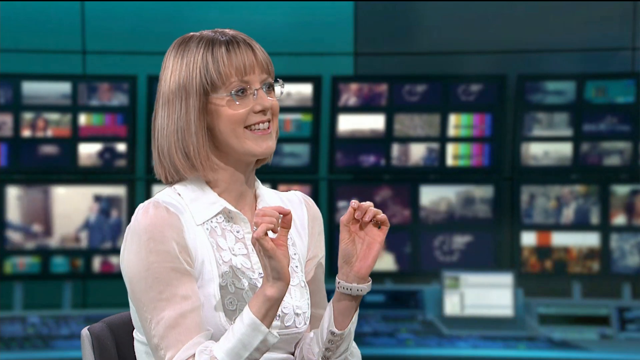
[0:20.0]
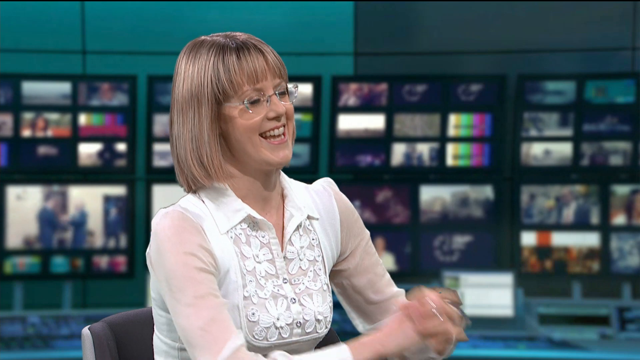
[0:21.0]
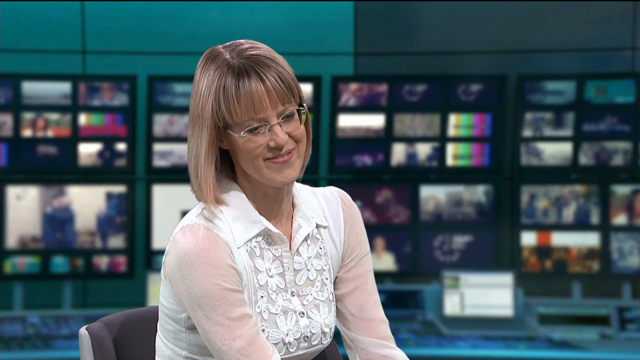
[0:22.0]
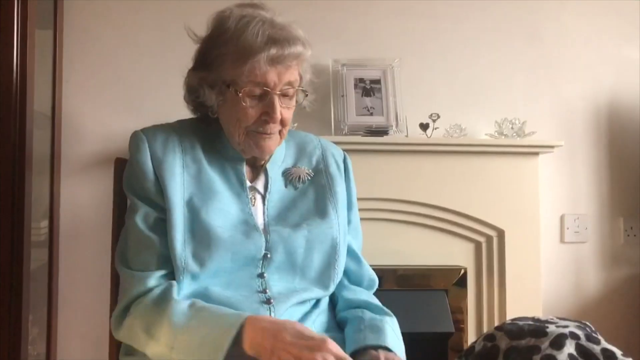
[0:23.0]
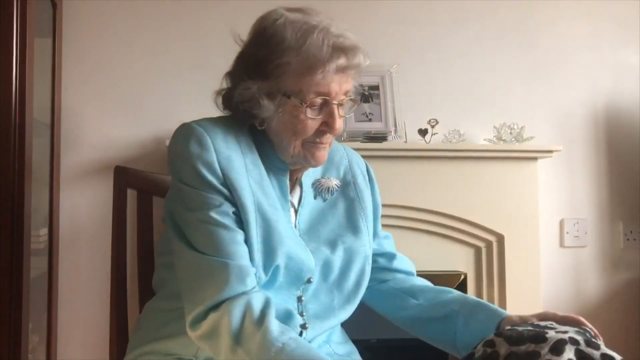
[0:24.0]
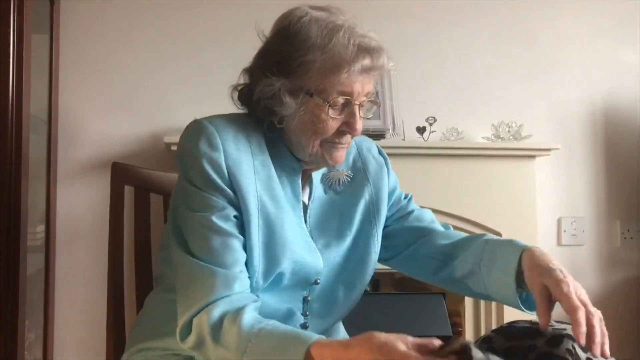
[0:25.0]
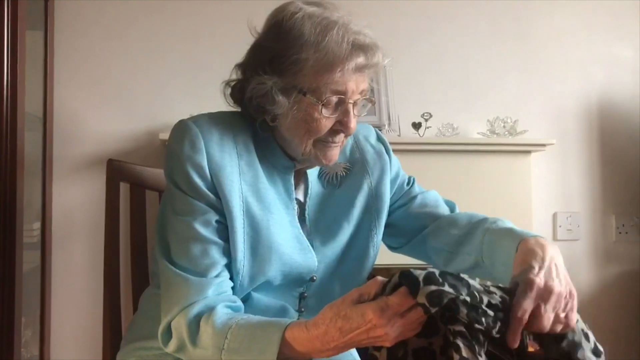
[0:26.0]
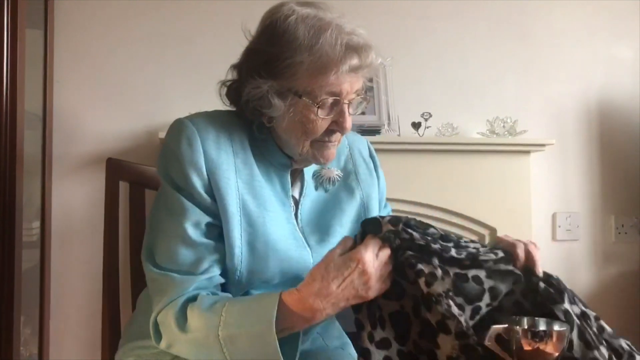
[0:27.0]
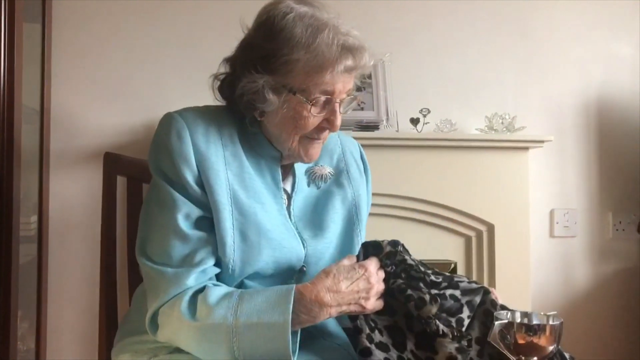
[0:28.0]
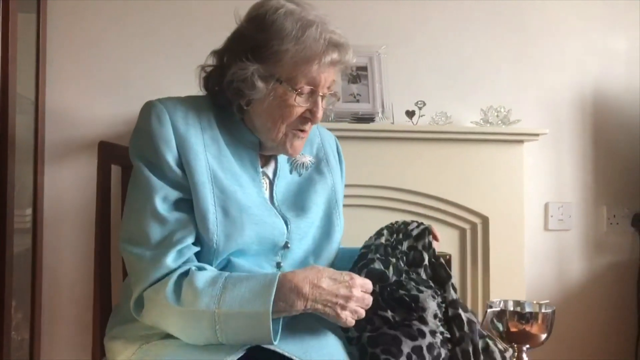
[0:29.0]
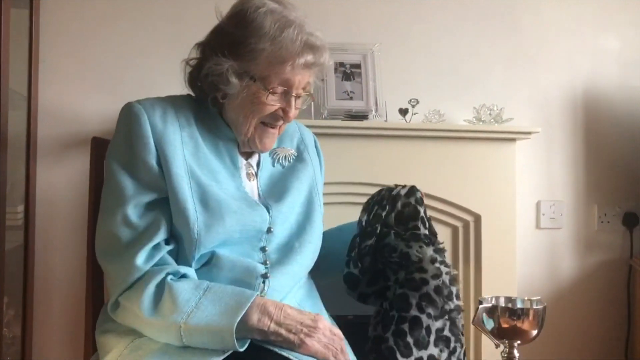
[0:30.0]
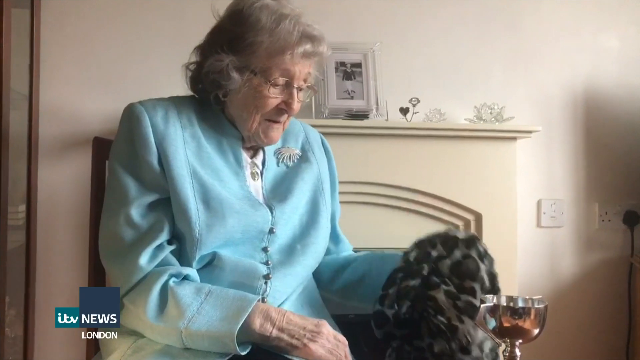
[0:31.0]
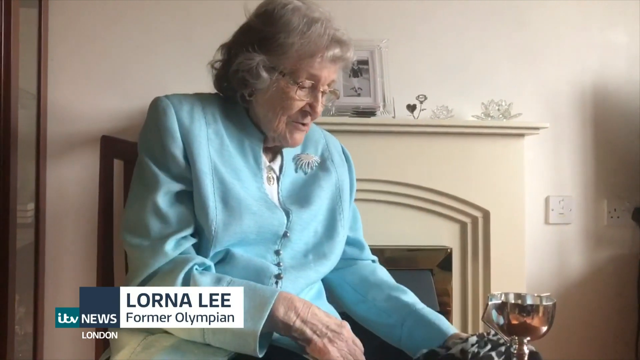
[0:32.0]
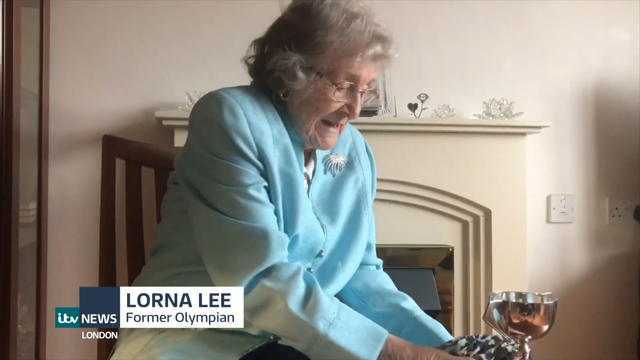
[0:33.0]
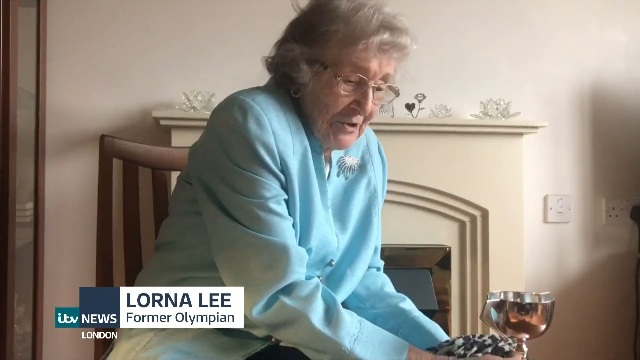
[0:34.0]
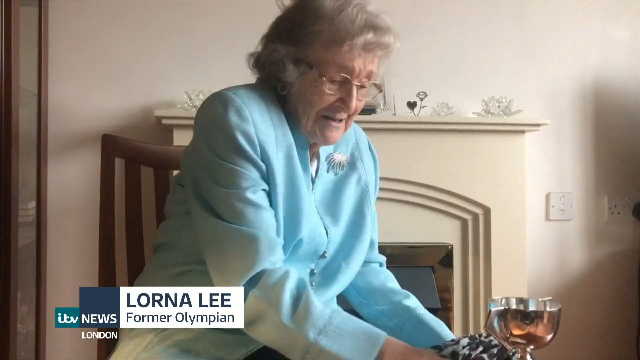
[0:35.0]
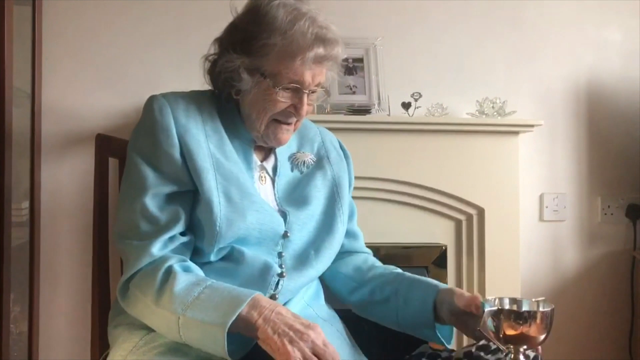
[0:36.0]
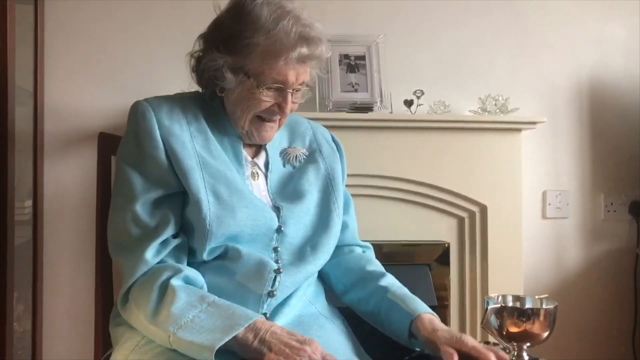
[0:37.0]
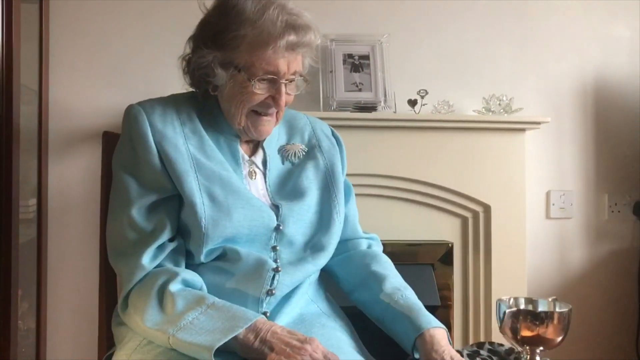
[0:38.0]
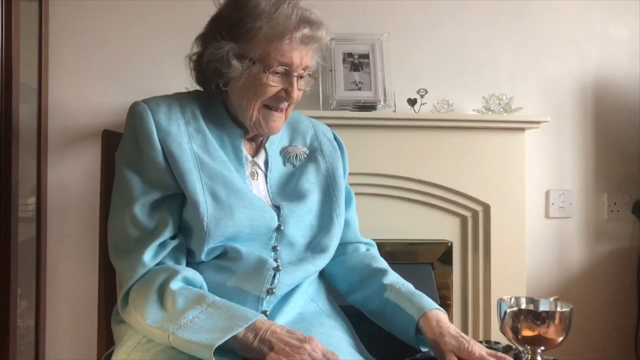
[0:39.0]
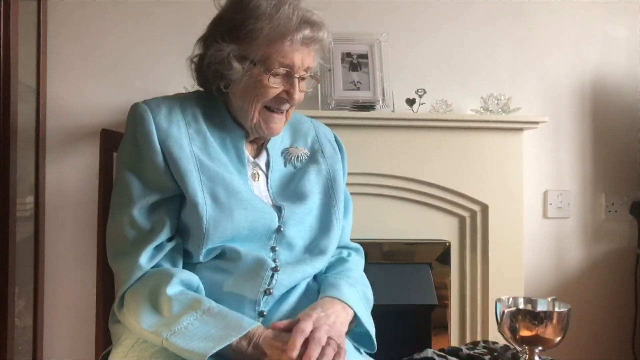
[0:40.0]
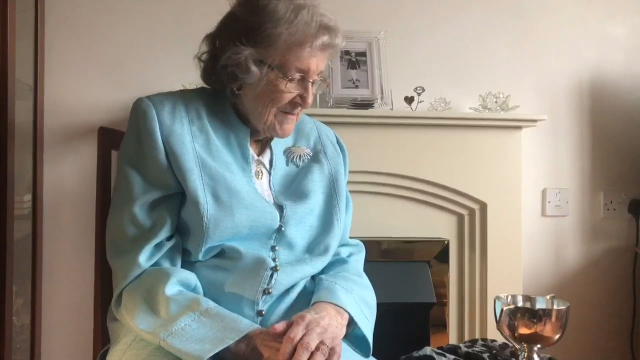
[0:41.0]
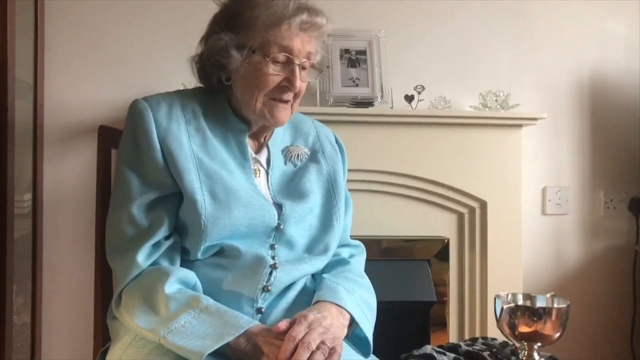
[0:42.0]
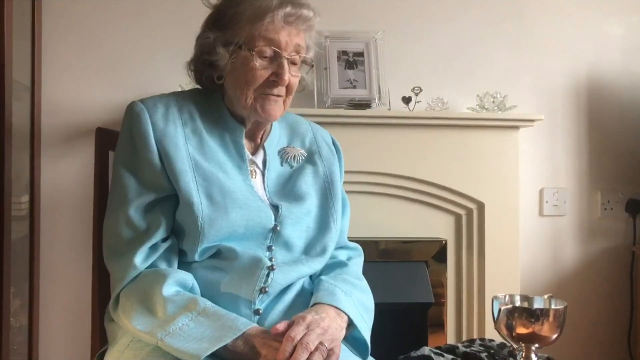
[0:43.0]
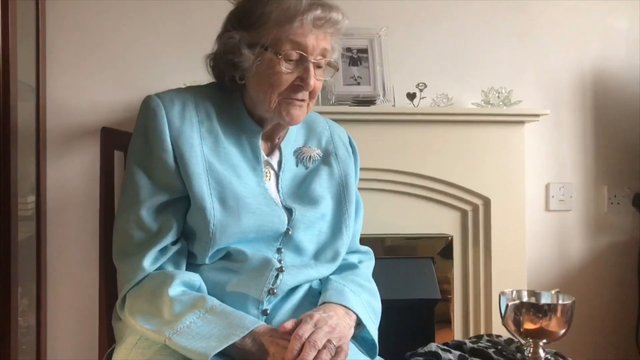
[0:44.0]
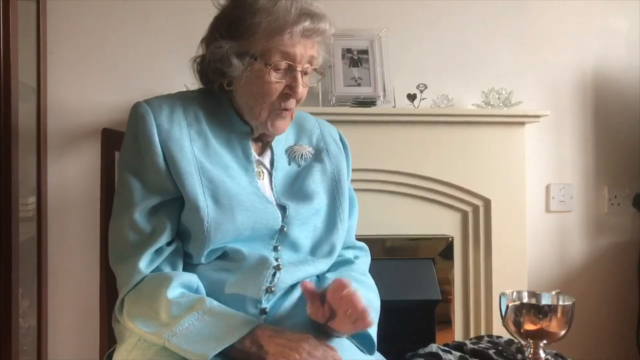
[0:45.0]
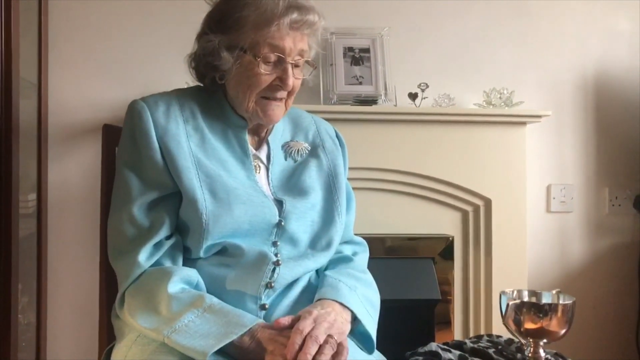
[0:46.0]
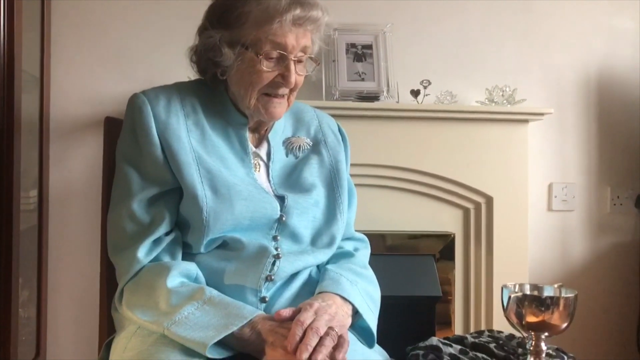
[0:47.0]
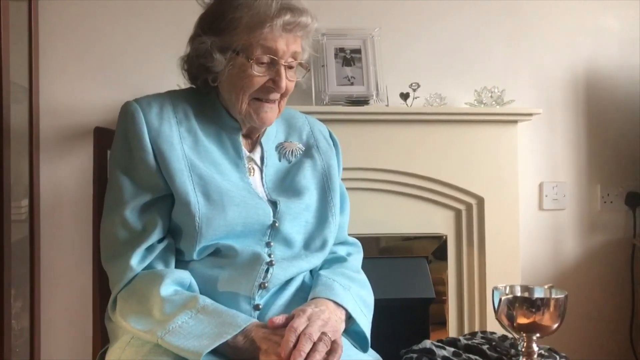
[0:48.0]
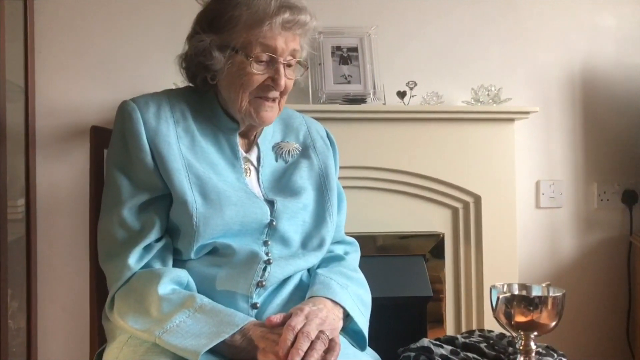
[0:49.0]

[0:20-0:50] The woman in the white blouse, brown skirt and stockings has a short haircut, wears glasses and a white watch on her left wrist, and talks with her hands. Behind her are a lot of computer monitors and other monitors on the wall; she seems to be in some type of newsroom. The video then shows an older woman in a blue suit and glasses handling some type of scarf. A wine cup or glass appears. On-screen text reads "Lorna Lee, former Olympian." The news report is out of London. The older woman looks at the silver cup, possibly a trophy. She looks maybe in her 80s or 90.